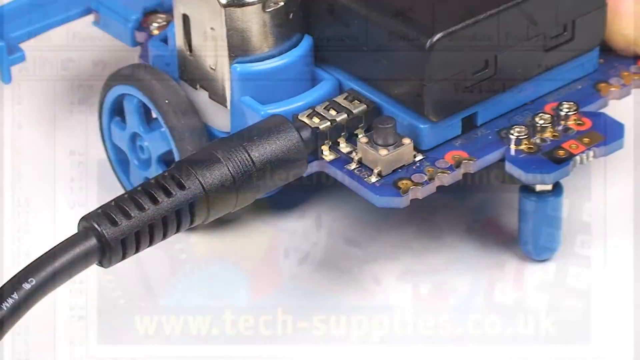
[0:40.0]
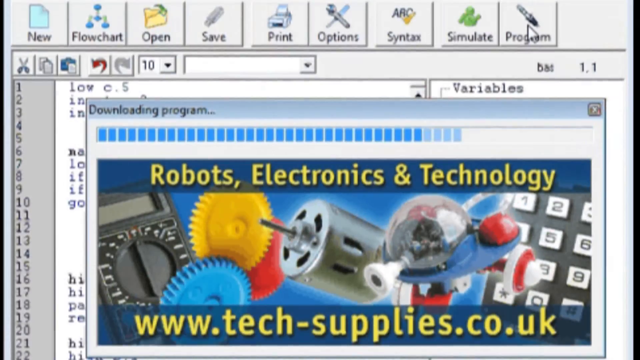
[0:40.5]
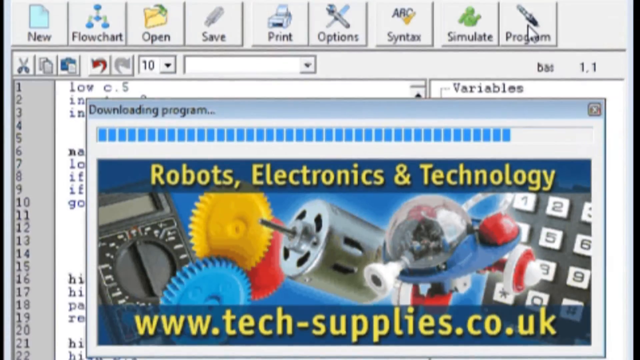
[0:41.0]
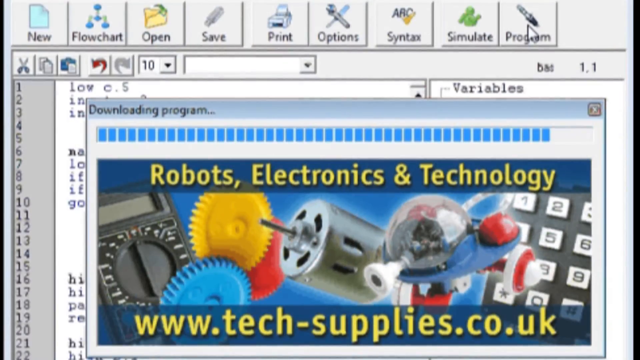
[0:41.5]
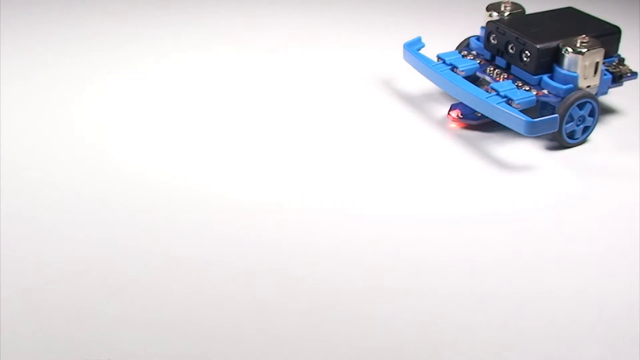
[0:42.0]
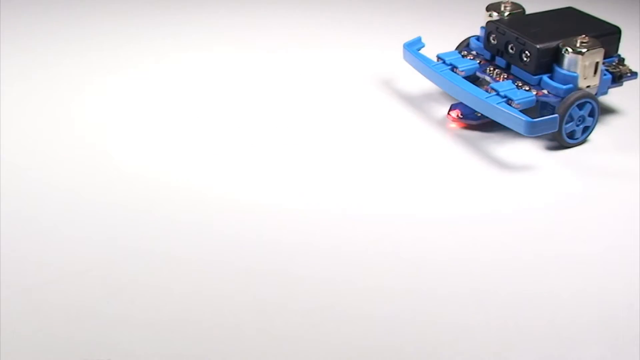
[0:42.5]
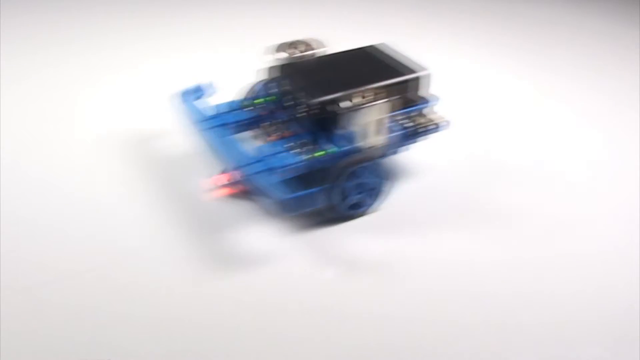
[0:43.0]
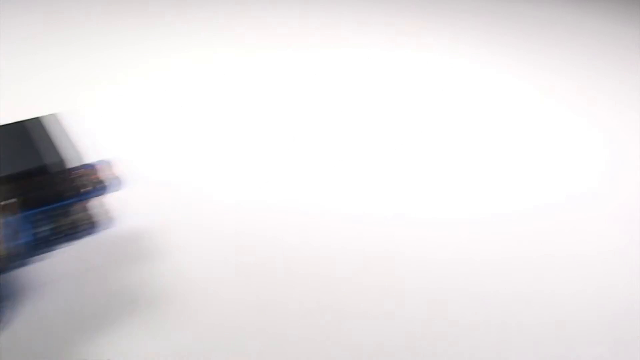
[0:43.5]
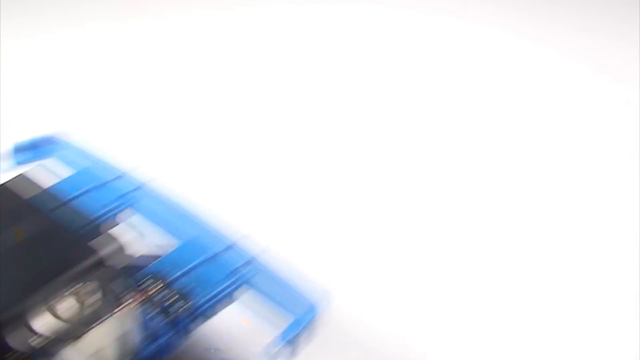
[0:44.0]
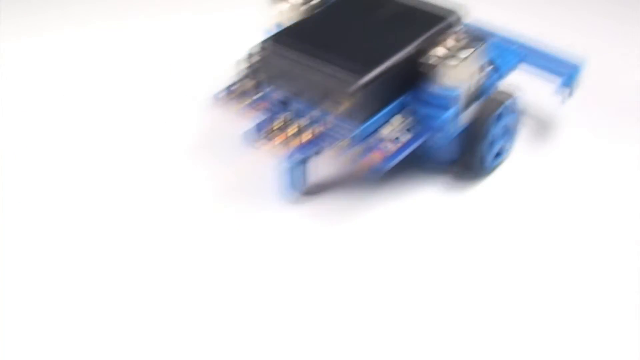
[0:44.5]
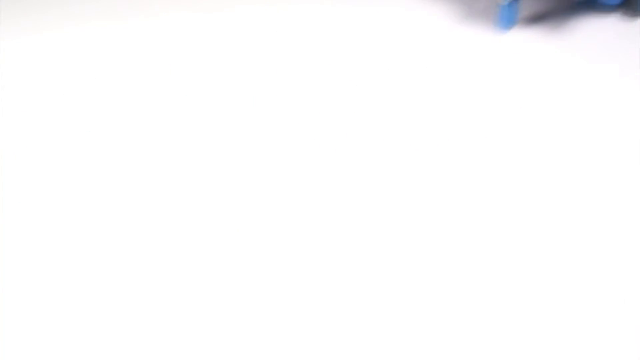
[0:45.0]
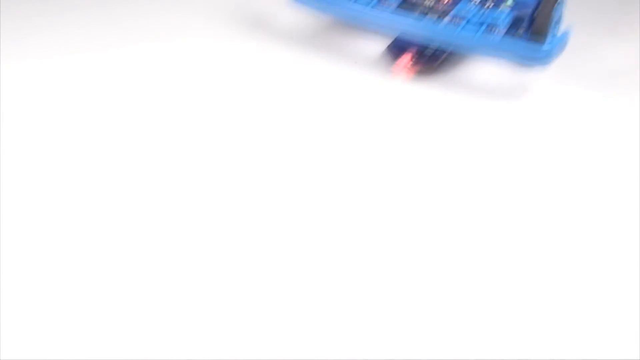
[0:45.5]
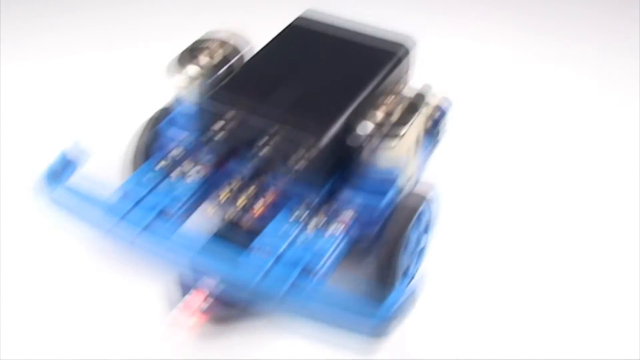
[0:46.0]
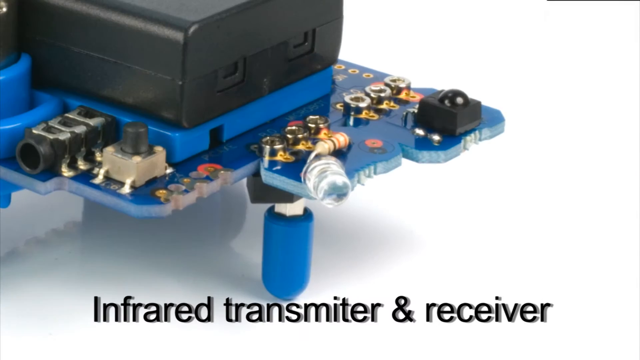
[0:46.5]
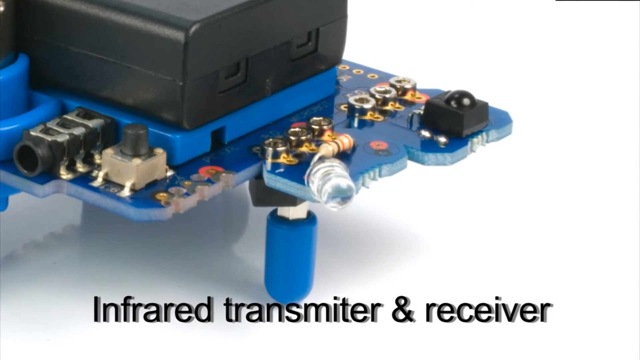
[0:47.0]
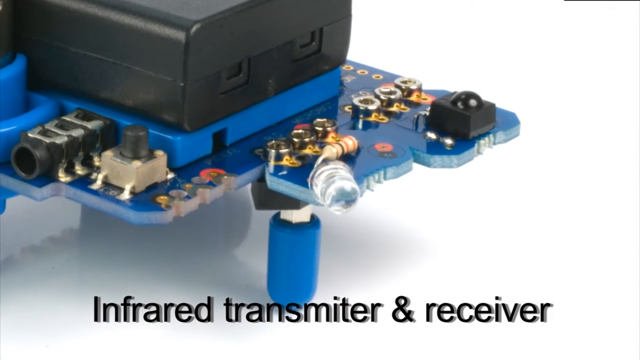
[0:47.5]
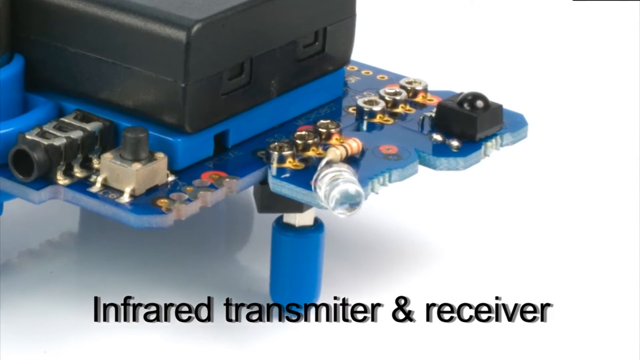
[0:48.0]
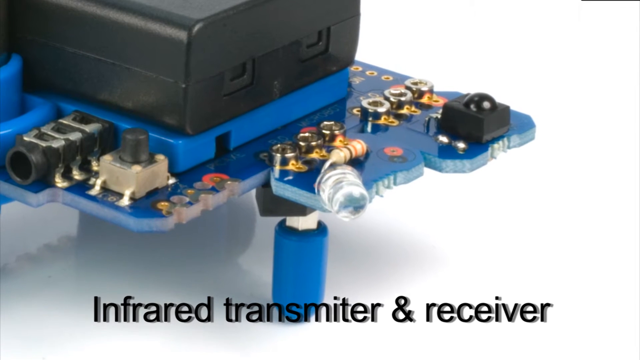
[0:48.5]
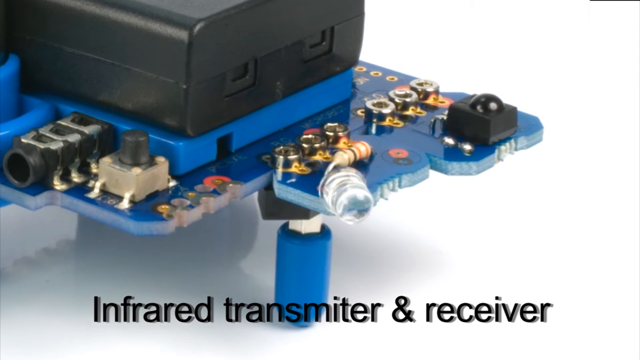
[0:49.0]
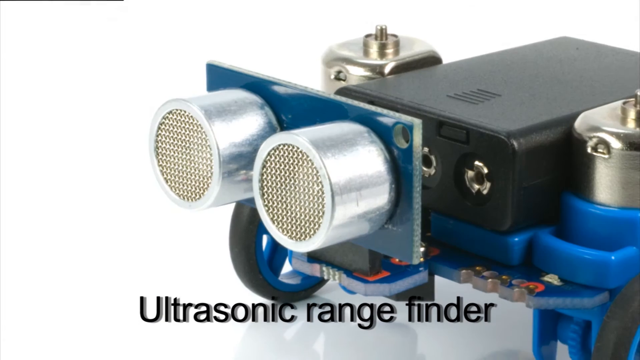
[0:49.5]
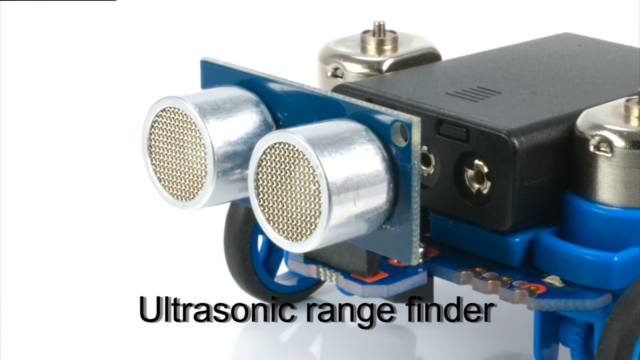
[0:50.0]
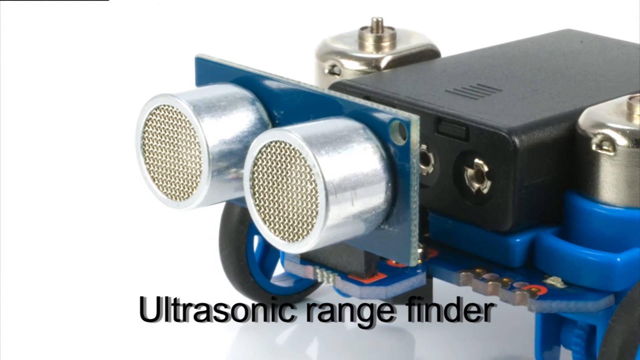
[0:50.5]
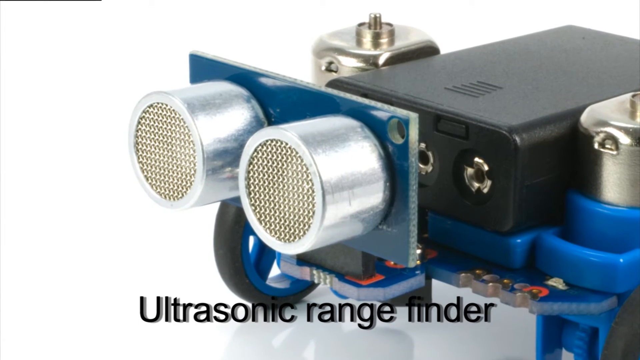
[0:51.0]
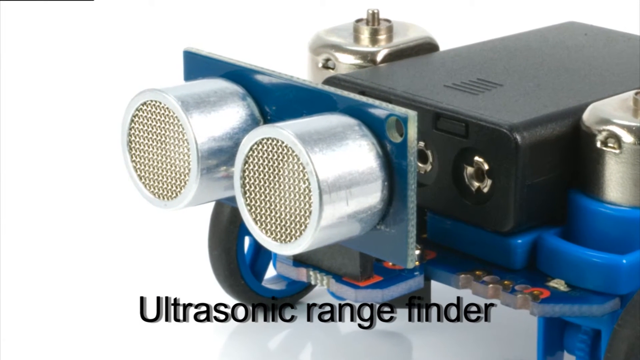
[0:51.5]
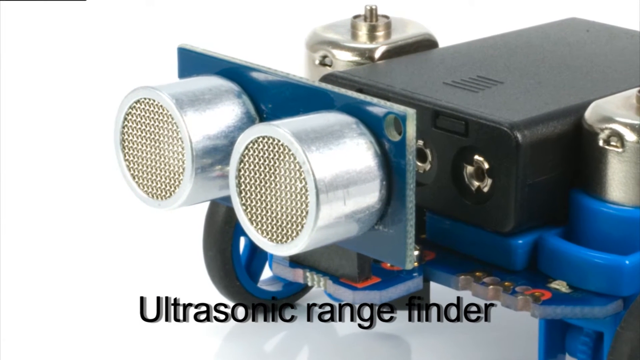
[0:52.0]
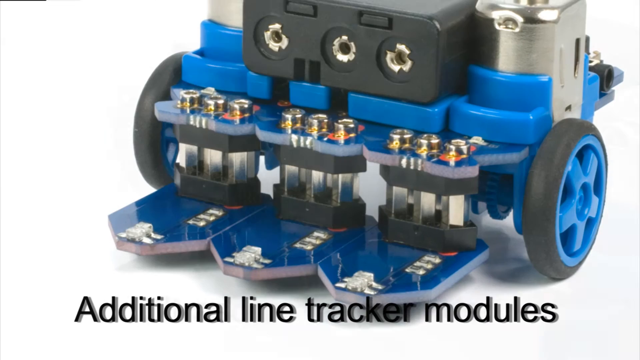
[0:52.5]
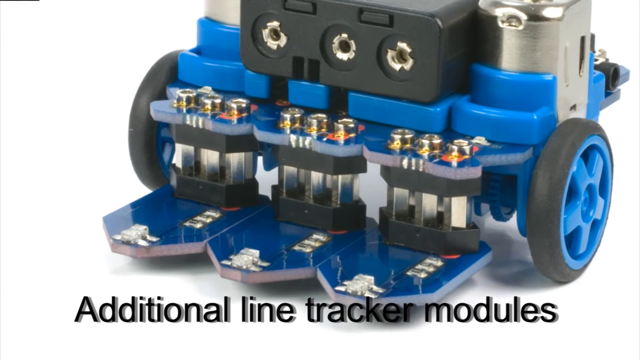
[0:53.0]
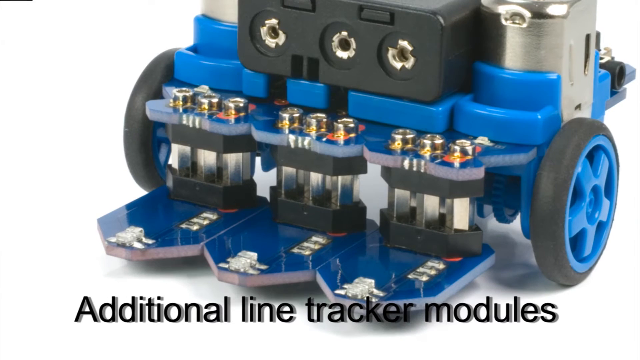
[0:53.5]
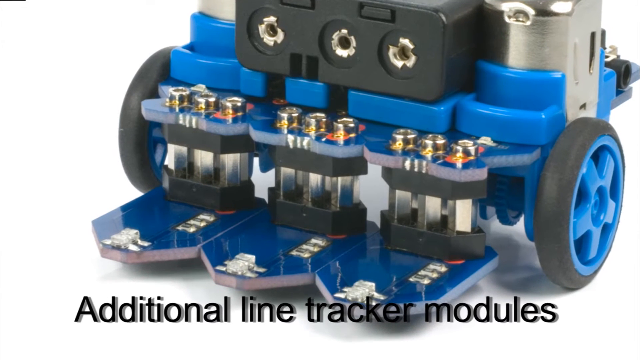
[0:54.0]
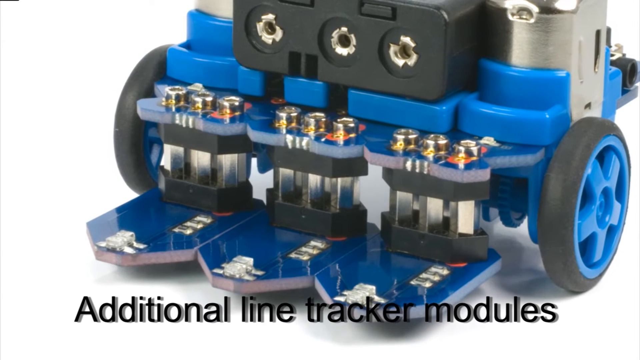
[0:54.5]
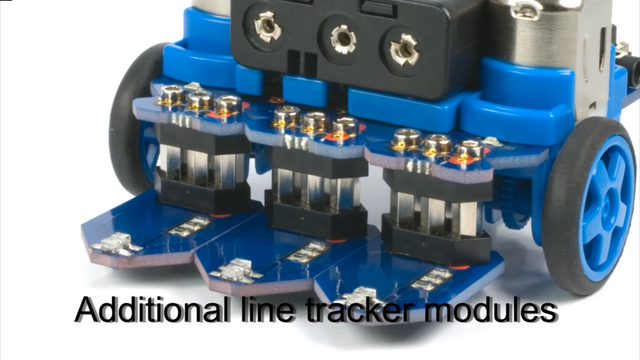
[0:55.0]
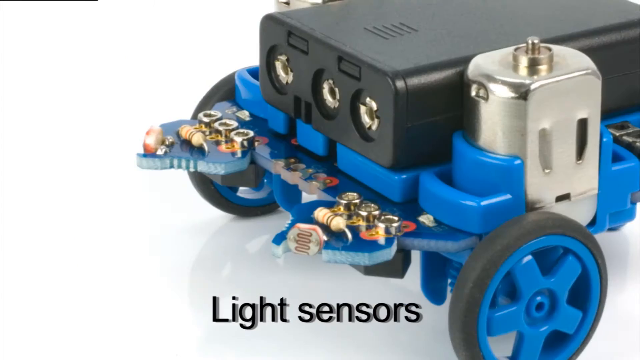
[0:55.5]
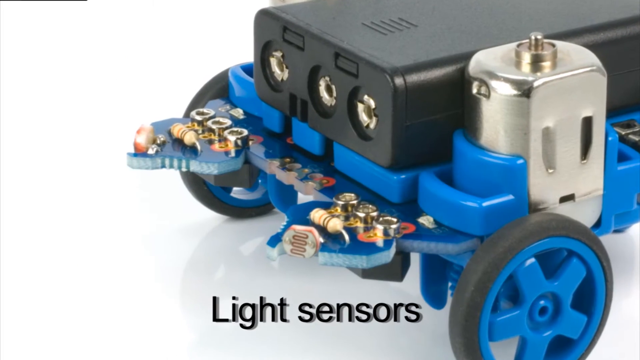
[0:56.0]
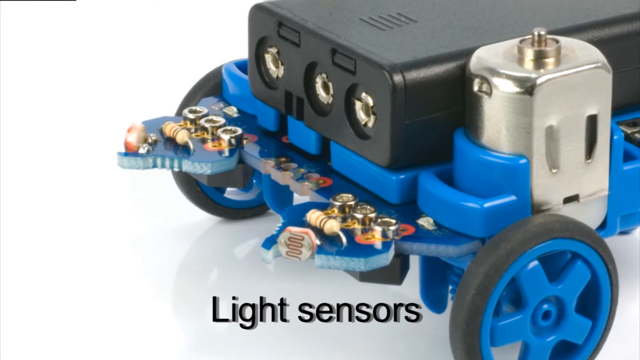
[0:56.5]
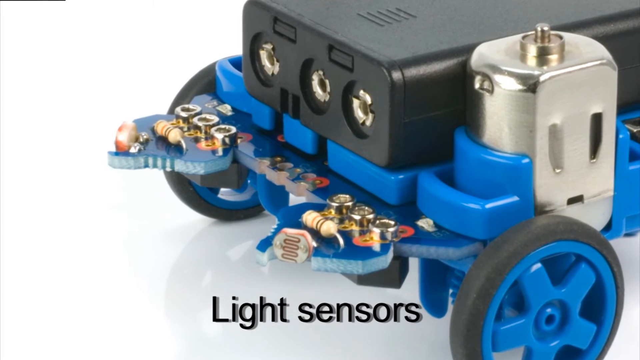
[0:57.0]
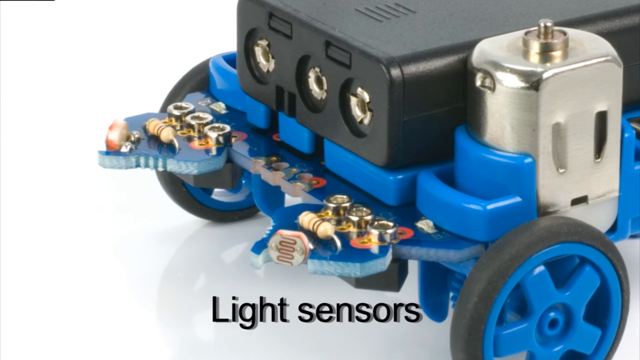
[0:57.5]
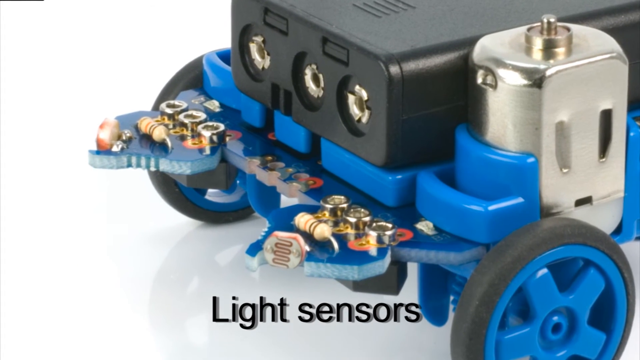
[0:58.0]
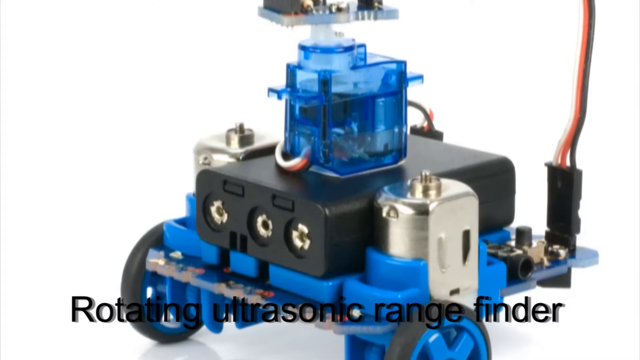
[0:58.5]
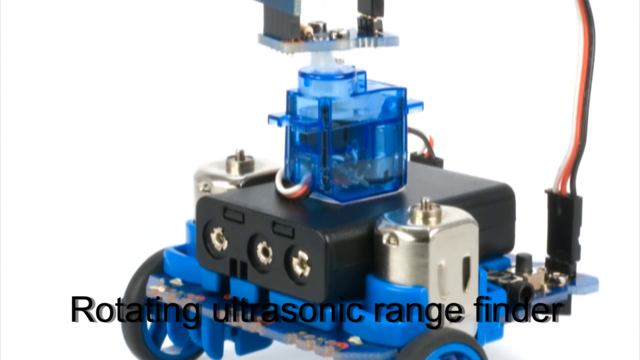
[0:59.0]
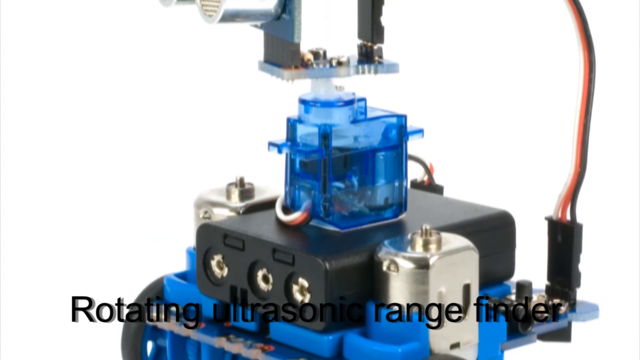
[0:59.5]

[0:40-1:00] The auxiliary is connected to the motherboard. Next, a page reading "downloading program" appears on top of the code meant to automate the motherboard, apparently downloading the code onto it. Then the motherboard with wheels, showing some green lights and one red light, starts to move, and the robot continues moving. The motherboard has an infrared transmitter and receiver paired with the ultrasonic rangefinder, as well as line tracker modules and some light sensors. The motors apparently have been connected and are running.